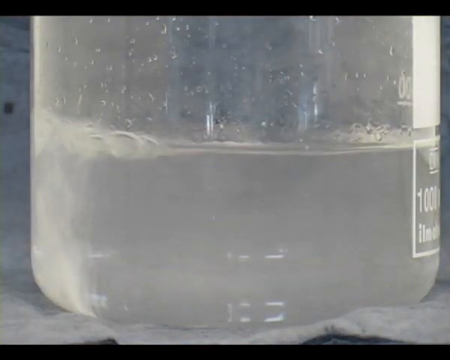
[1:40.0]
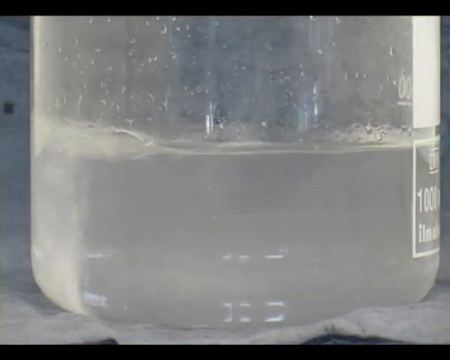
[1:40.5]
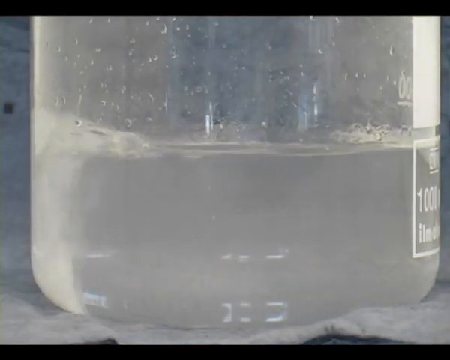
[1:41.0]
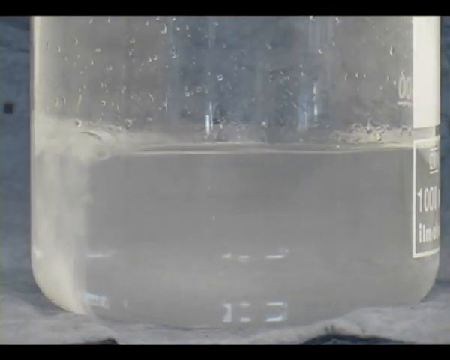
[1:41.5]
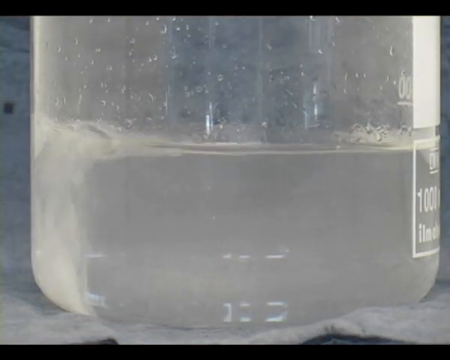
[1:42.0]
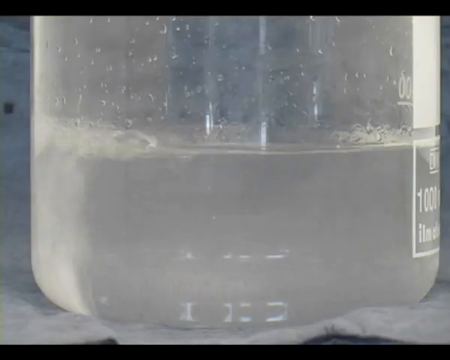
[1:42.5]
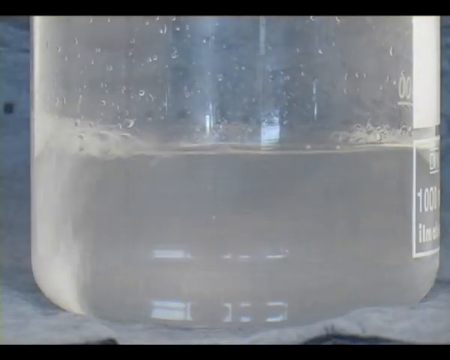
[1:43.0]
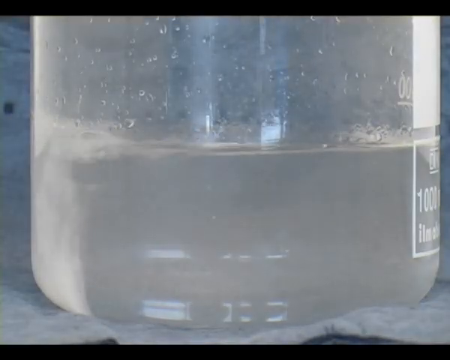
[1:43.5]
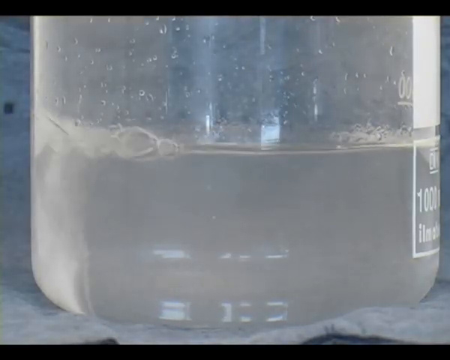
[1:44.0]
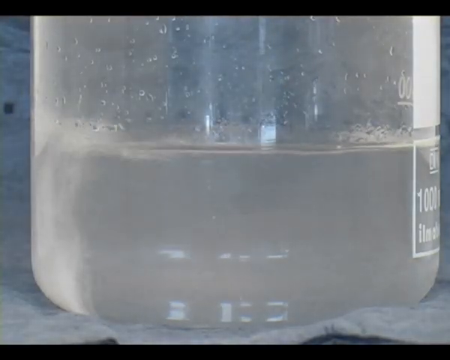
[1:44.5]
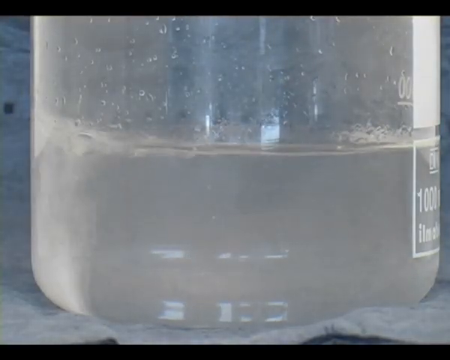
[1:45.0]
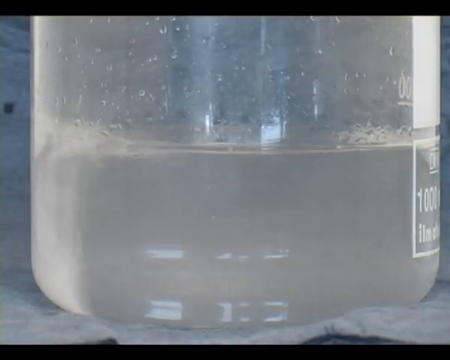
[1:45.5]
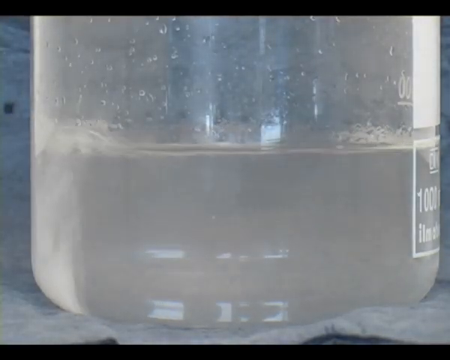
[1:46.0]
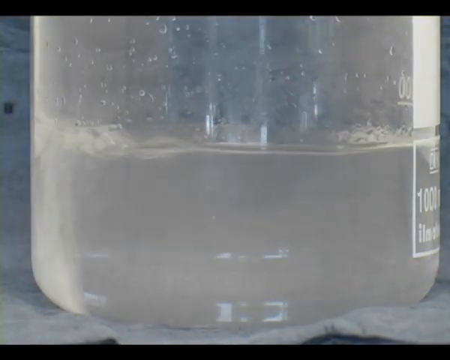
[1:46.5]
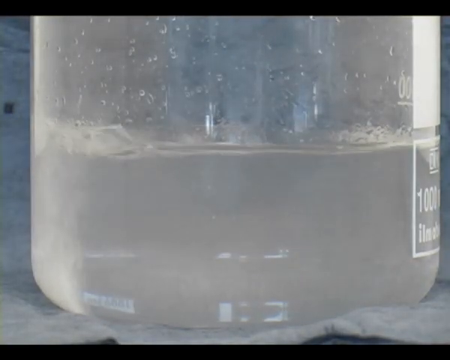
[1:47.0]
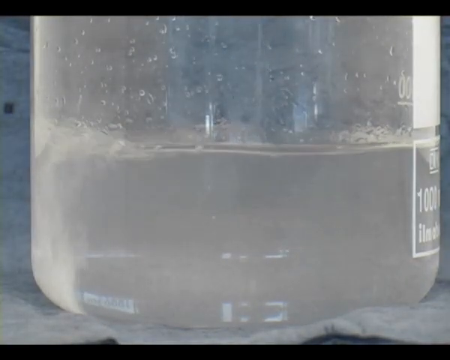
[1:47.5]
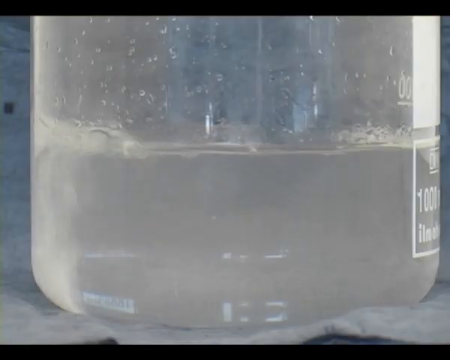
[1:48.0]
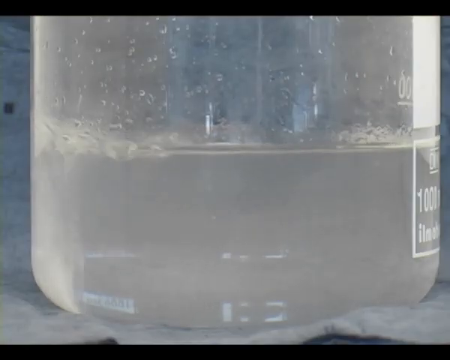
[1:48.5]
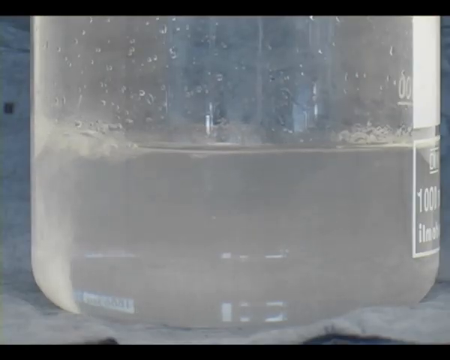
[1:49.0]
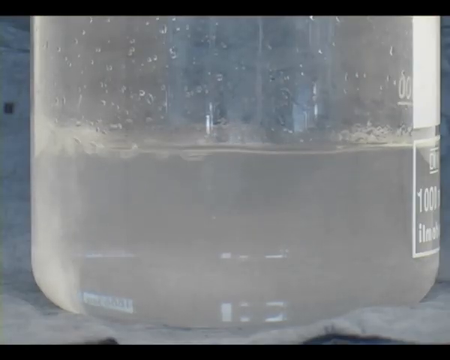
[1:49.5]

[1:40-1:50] The strontium, a piece that looks like a rock, has traveled from the right side of the glass to the left and keeps reacting. The water looks like it is boiling, but only where the strontium is, all the way on the left side. The water now looks grayish and is not as clear. A person is visible standing in the glass area. The strontium continues to react and bubble, and the bubbles disappear right away, all on the left side.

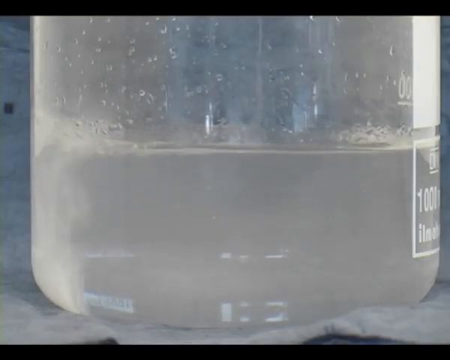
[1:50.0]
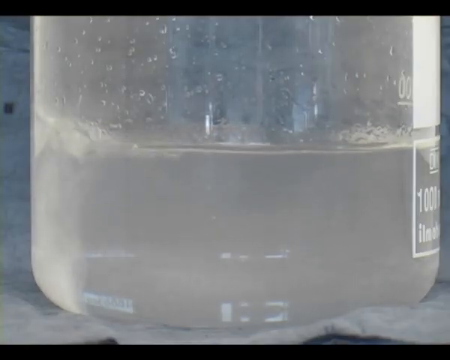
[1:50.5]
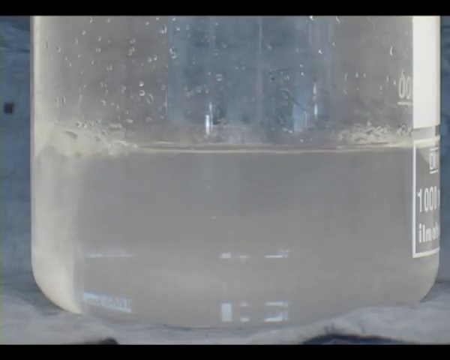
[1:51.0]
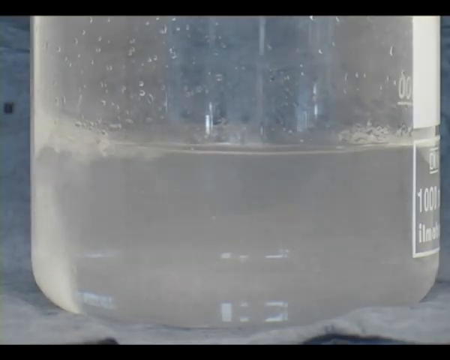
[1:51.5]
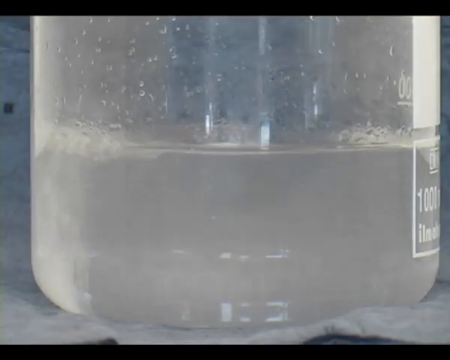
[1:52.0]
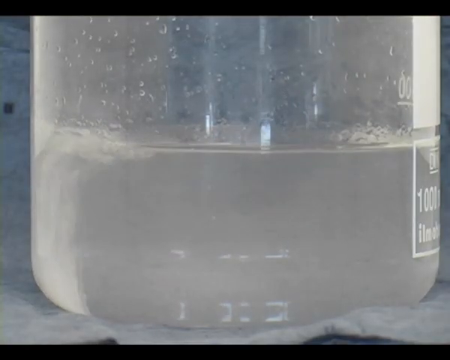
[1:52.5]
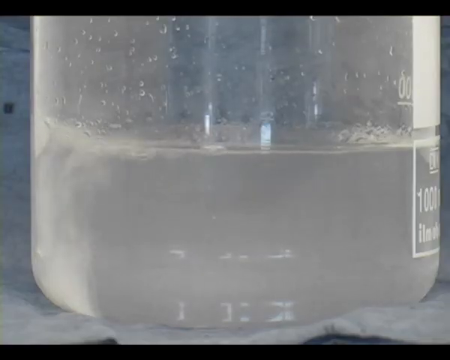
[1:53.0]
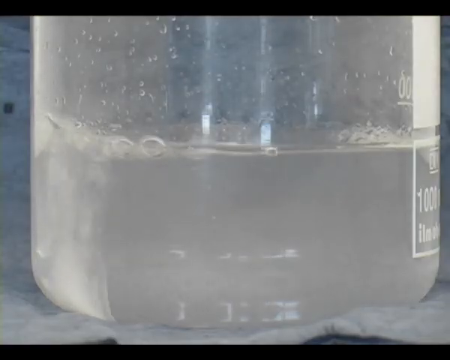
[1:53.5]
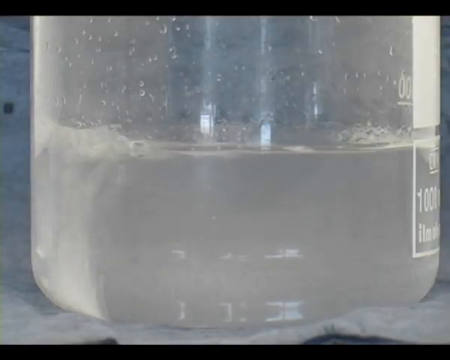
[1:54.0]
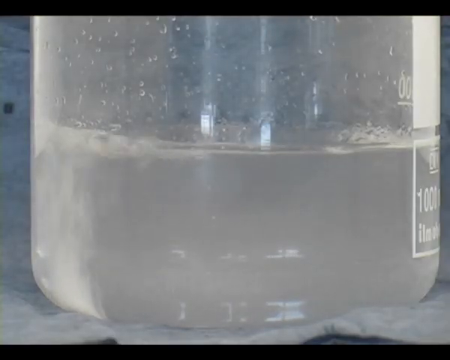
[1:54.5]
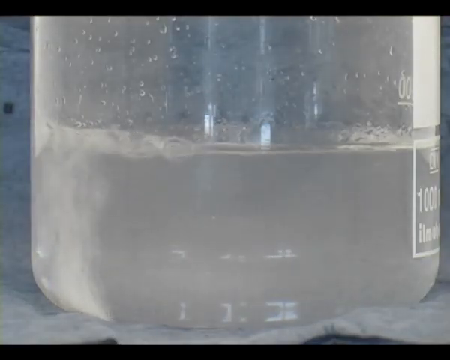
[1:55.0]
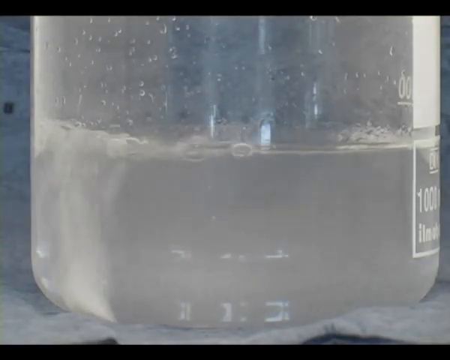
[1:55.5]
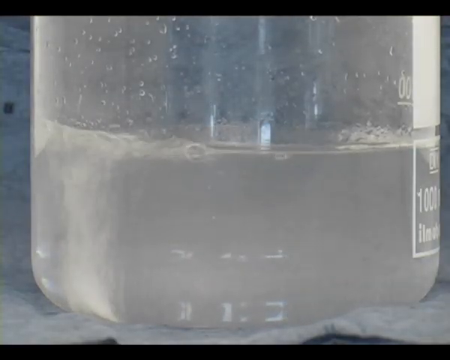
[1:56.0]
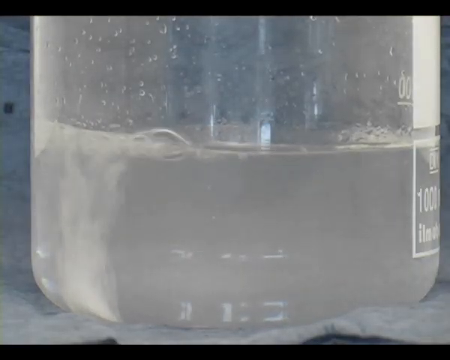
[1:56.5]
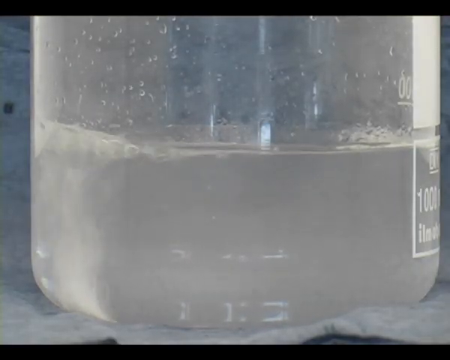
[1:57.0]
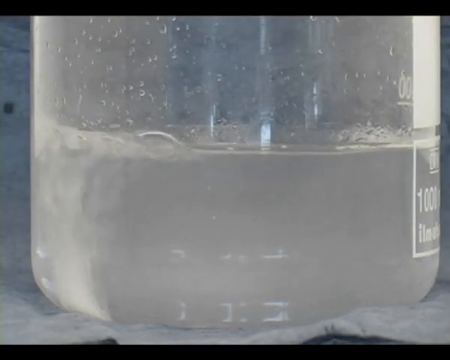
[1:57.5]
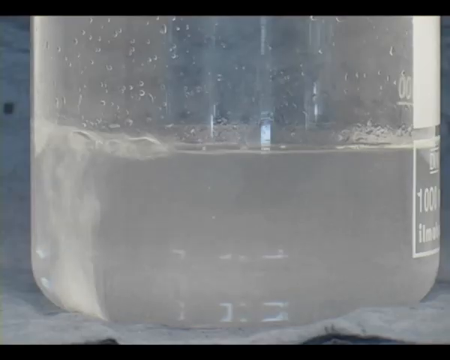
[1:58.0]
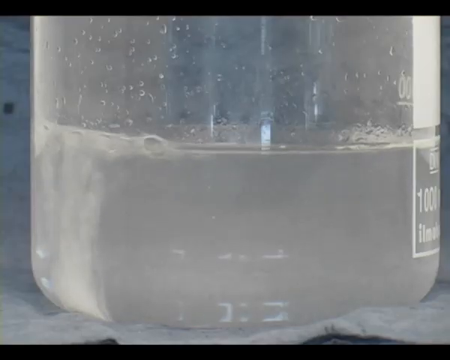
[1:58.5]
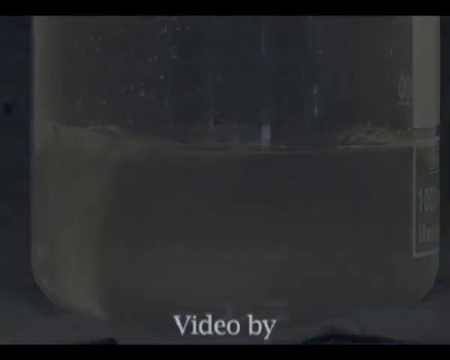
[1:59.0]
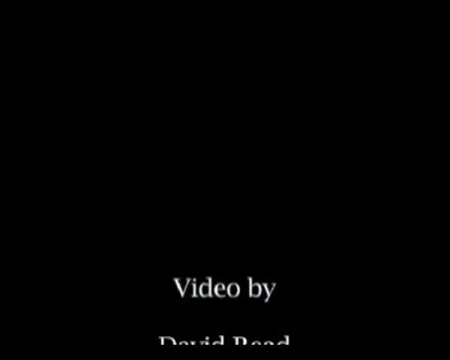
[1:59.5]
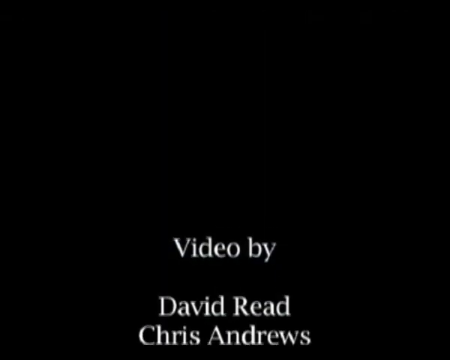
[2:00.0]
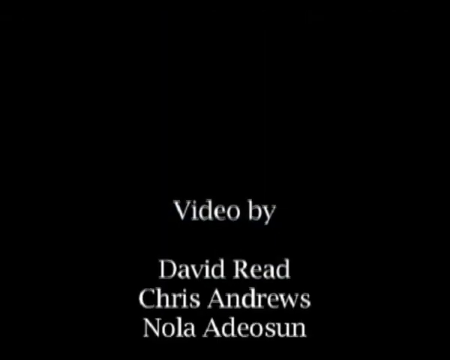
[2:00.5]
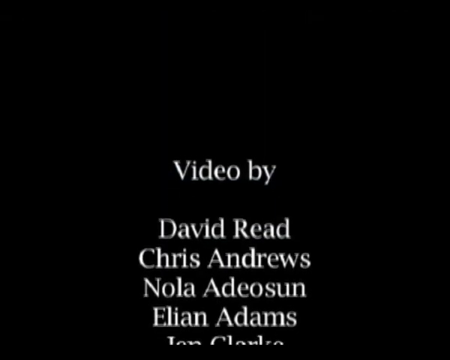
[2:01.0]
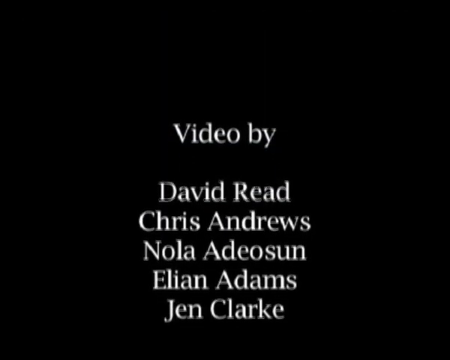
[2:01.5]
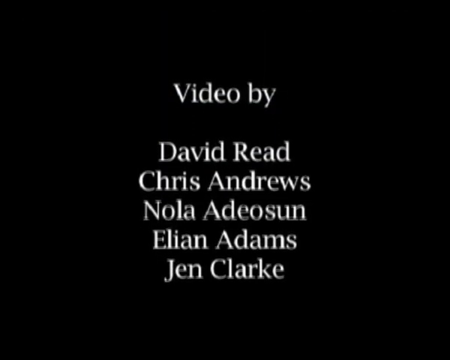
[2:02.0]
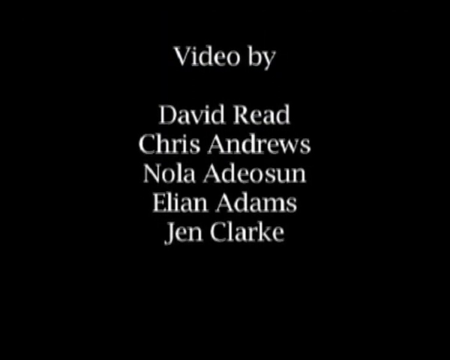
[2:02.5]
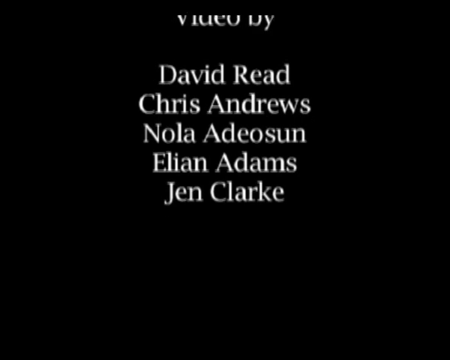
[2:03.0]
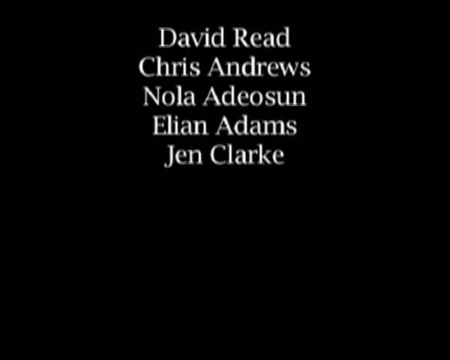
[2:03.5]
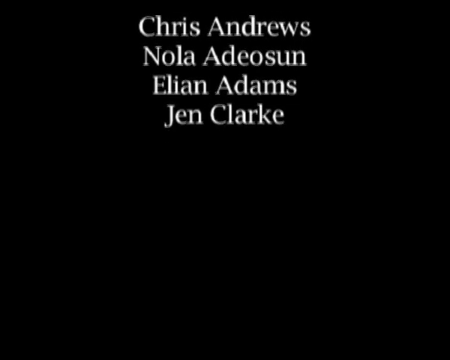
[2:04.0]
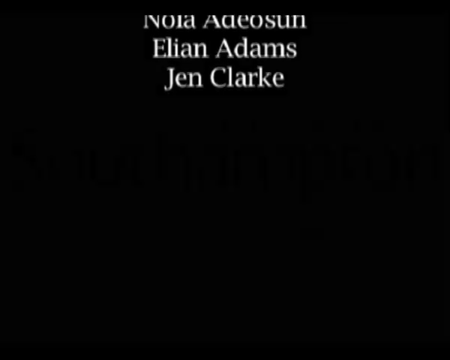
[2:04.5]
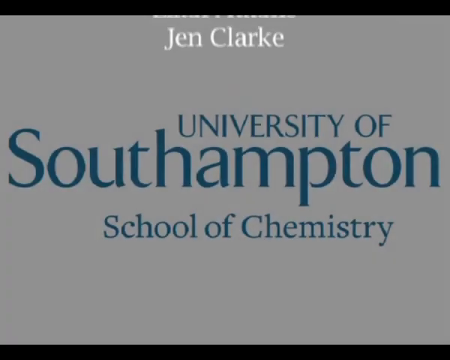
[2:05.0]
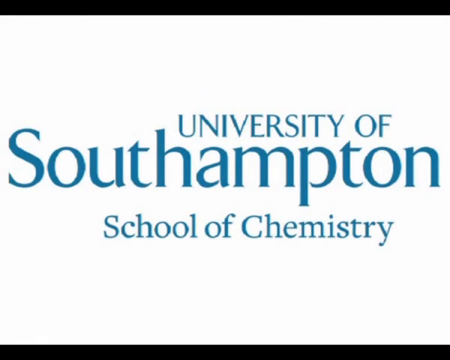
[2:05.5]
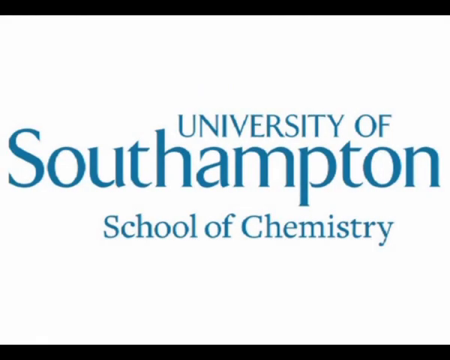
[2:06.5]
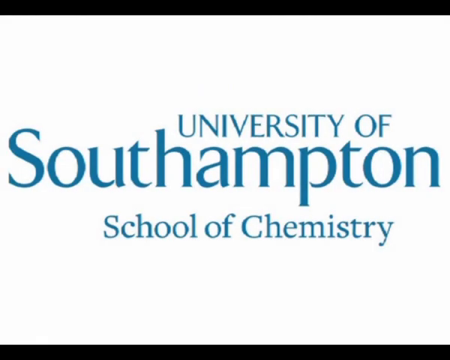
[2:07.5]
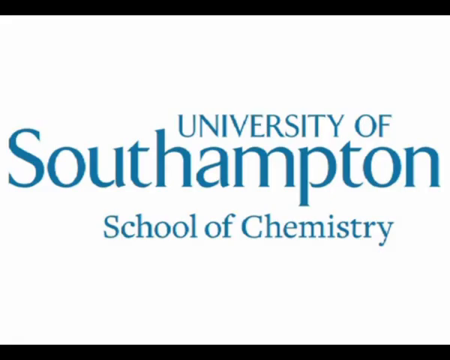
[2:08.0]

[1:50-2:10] The strontium is all the way to the left in a glass of what is apparently water, which is no longer clear but rather opaque. The reaction looks like boiling water, but only on the left-hand side, where the strontium has moved, and it continues to react. Text then reads "video by David Reed, Chris Andrews, Nola Adido-san, Ellian Adams, and Jen Clark." The experiment is at the University of Southampton, School of Chemistry, showing the difference between adding calcium to water and adding strontium to water.